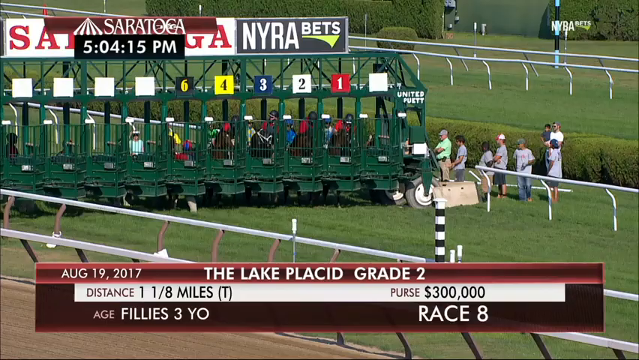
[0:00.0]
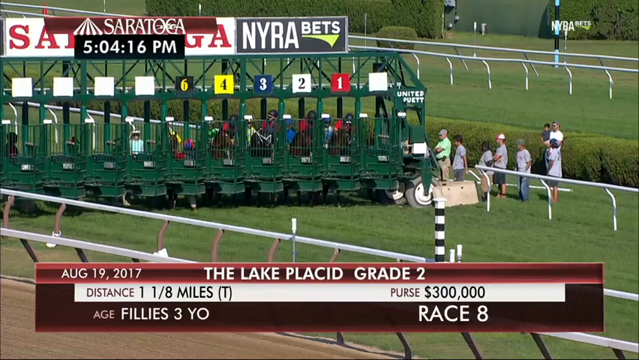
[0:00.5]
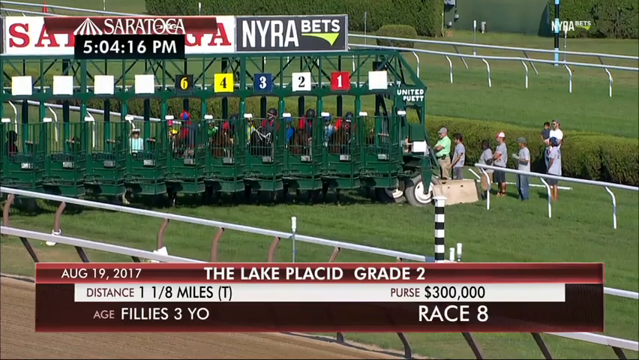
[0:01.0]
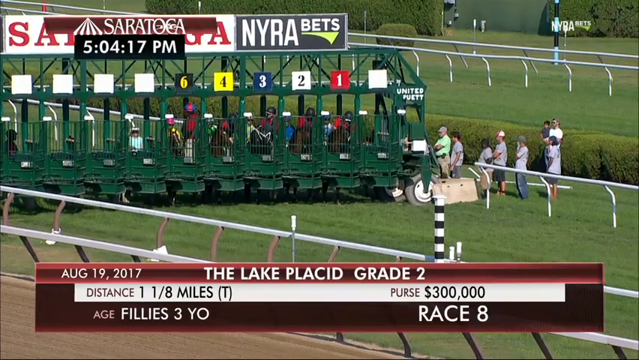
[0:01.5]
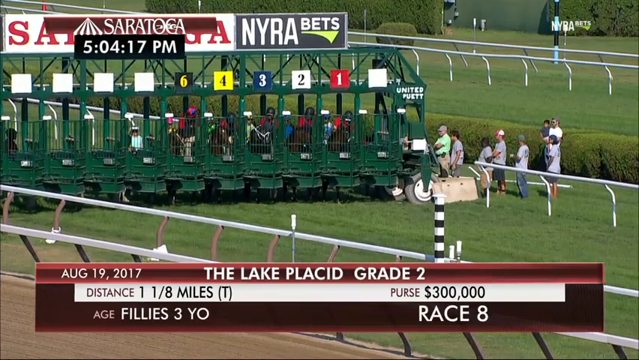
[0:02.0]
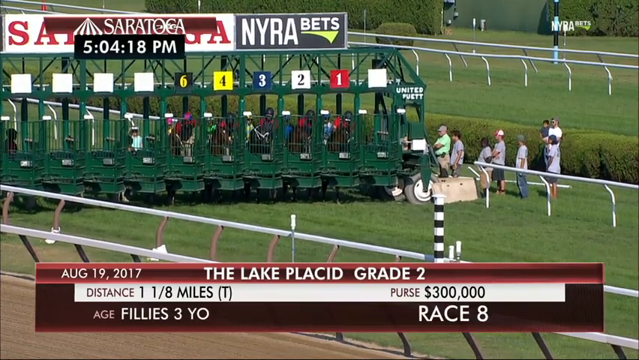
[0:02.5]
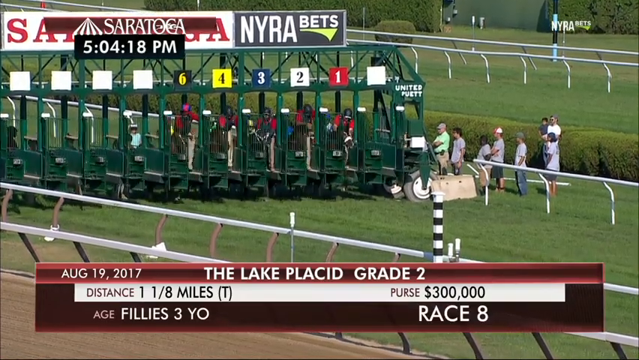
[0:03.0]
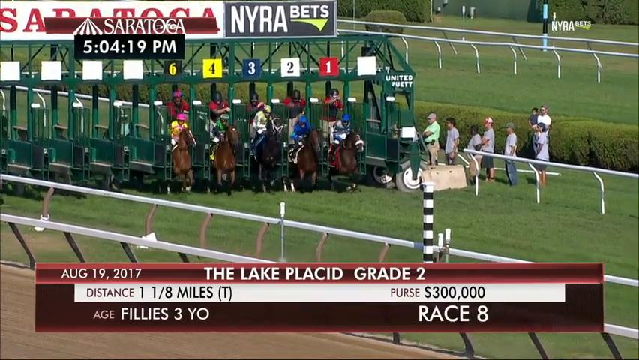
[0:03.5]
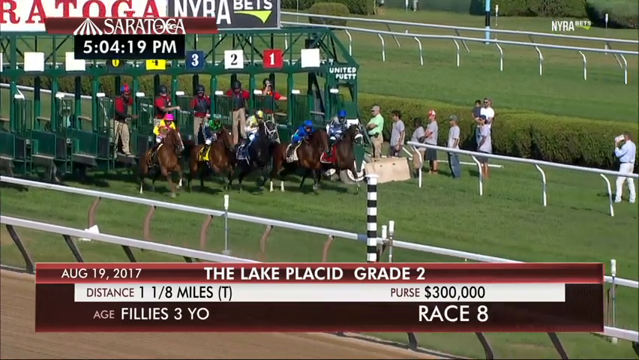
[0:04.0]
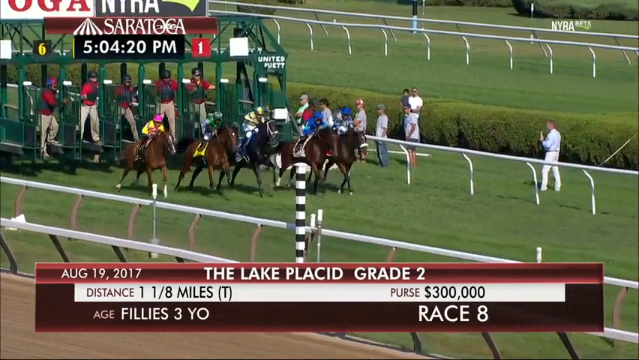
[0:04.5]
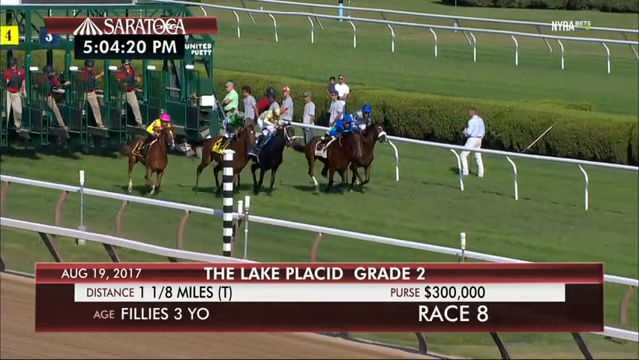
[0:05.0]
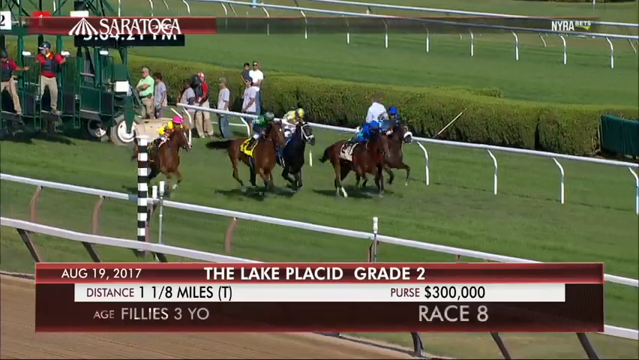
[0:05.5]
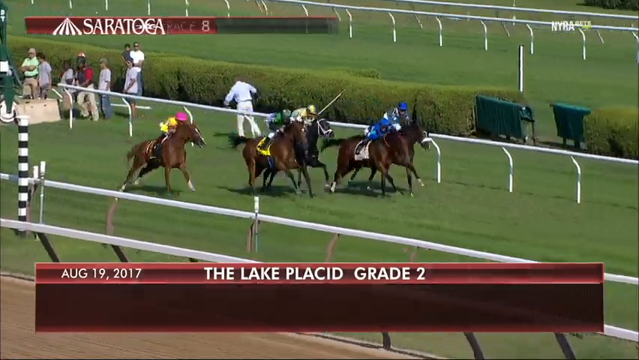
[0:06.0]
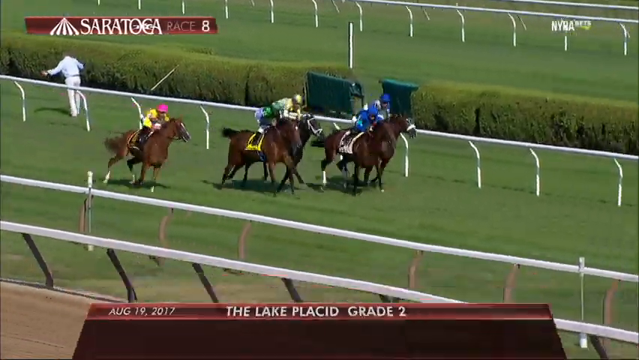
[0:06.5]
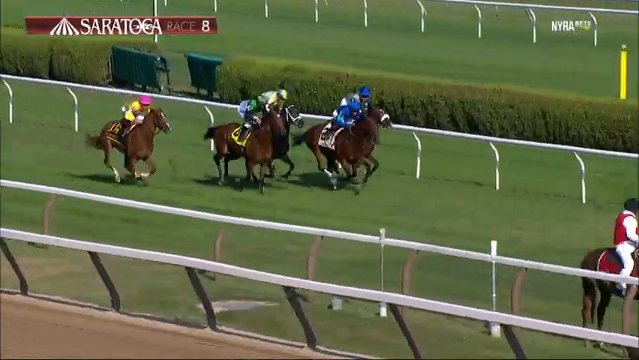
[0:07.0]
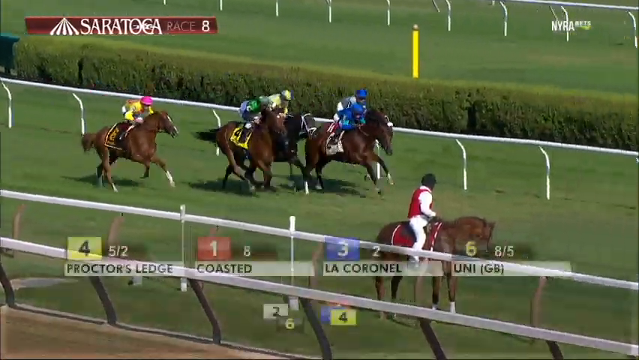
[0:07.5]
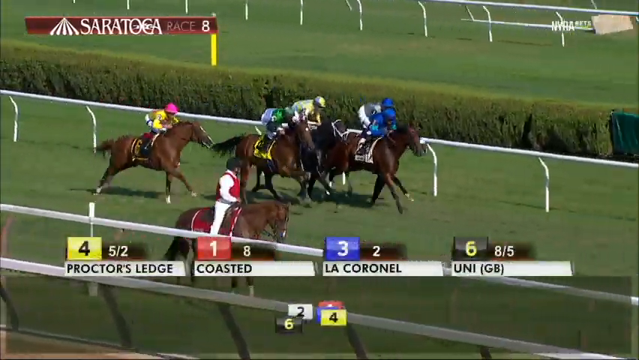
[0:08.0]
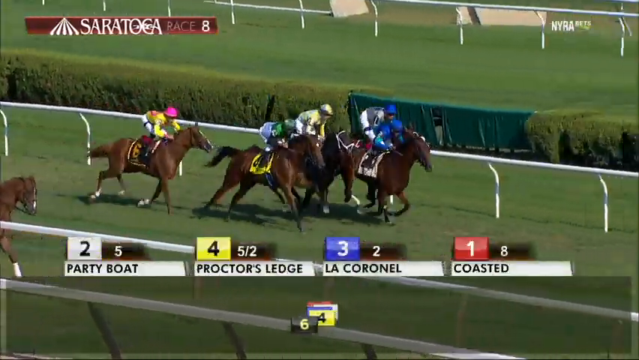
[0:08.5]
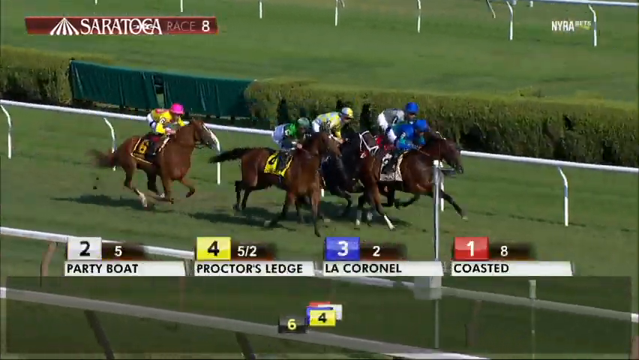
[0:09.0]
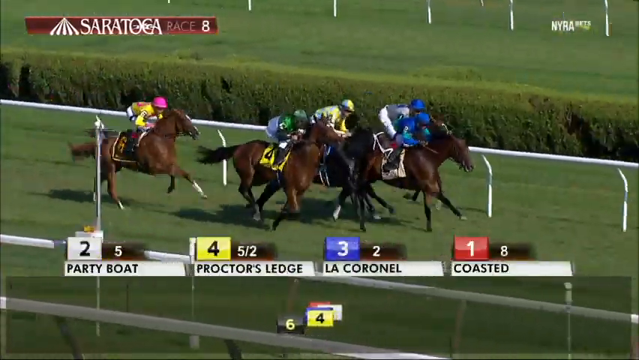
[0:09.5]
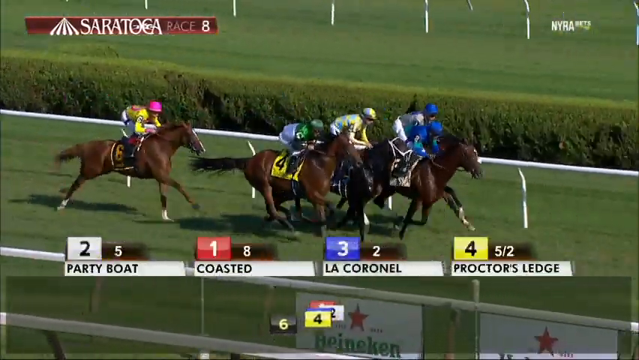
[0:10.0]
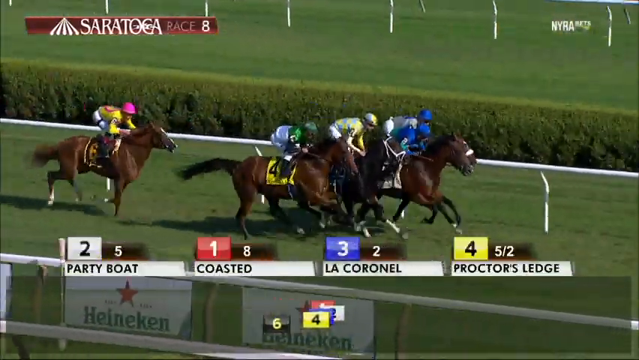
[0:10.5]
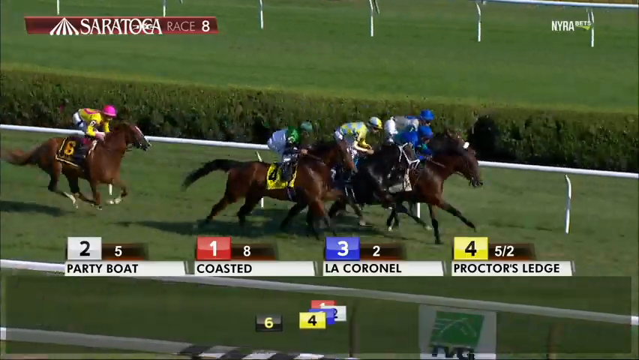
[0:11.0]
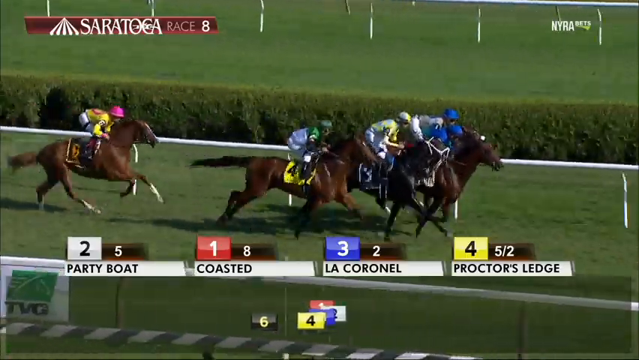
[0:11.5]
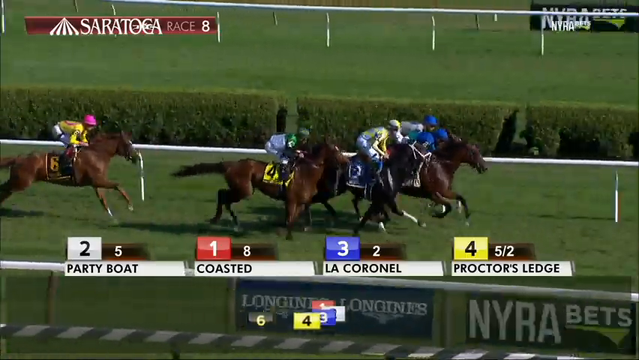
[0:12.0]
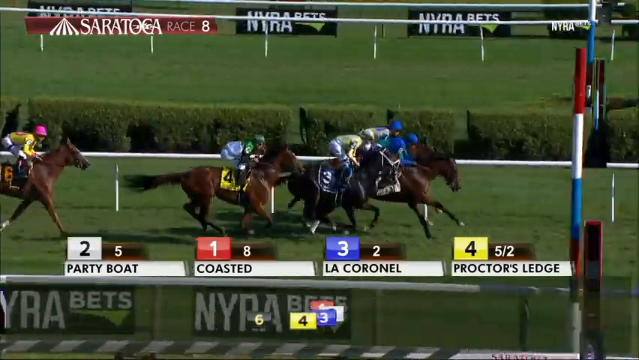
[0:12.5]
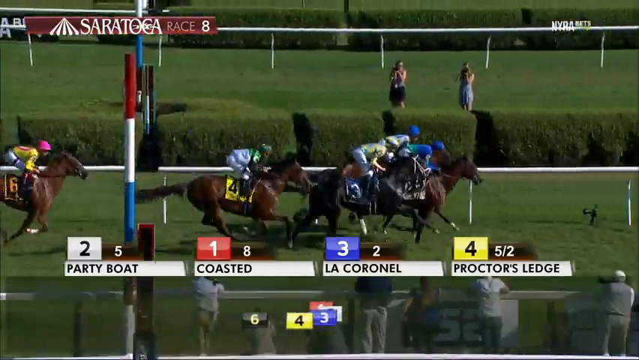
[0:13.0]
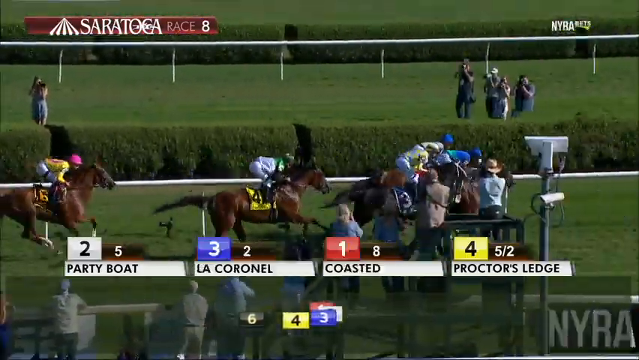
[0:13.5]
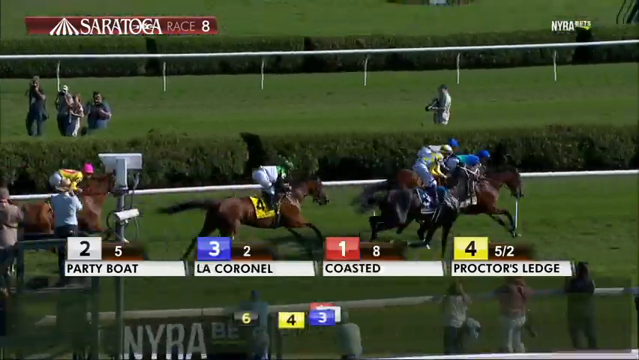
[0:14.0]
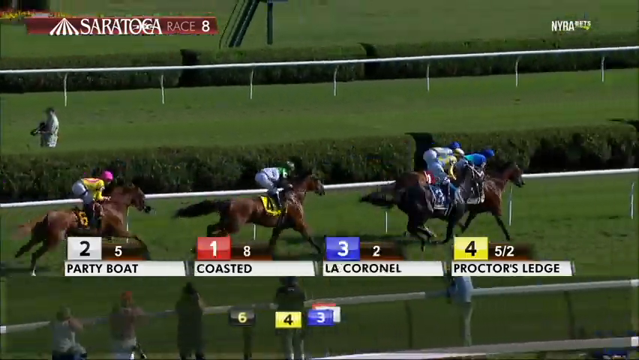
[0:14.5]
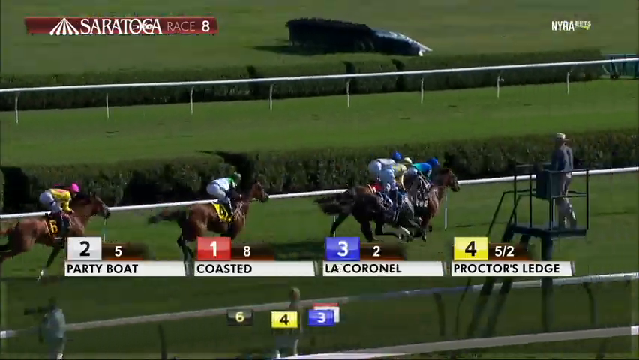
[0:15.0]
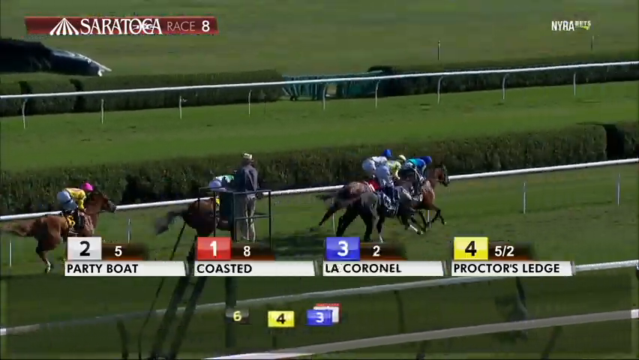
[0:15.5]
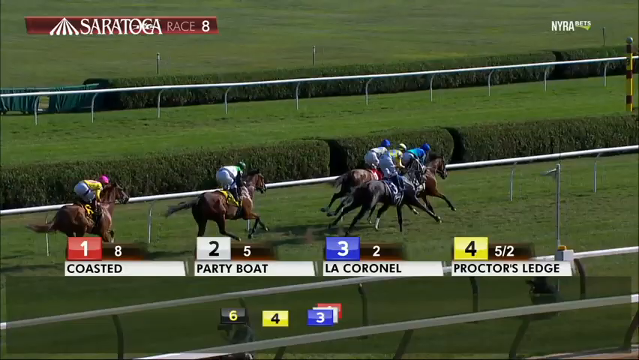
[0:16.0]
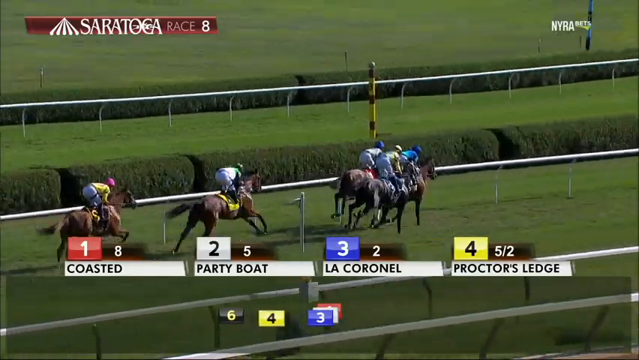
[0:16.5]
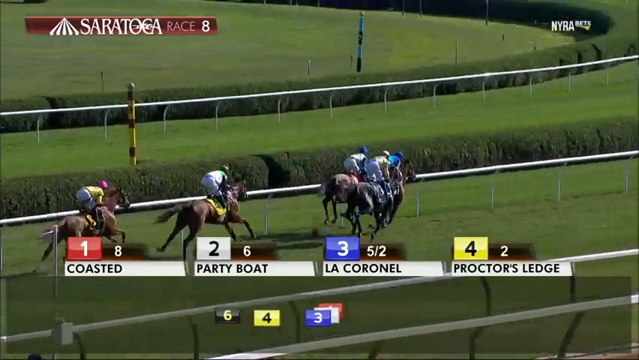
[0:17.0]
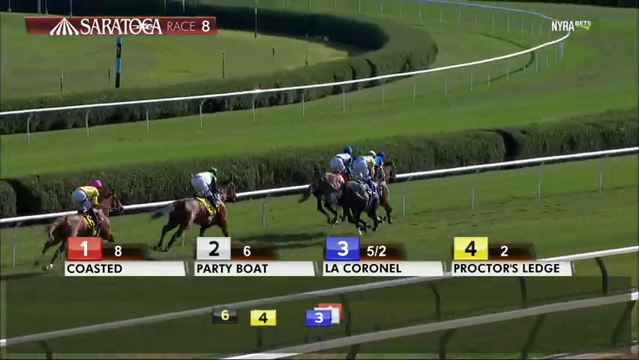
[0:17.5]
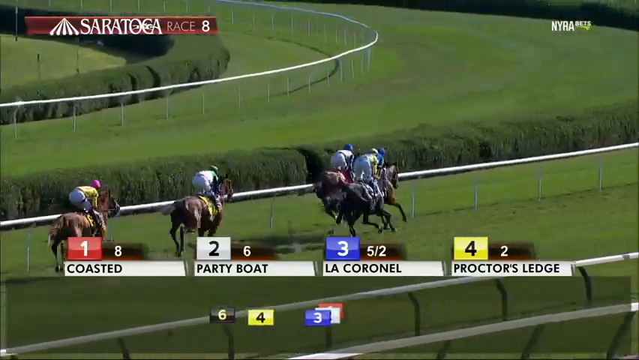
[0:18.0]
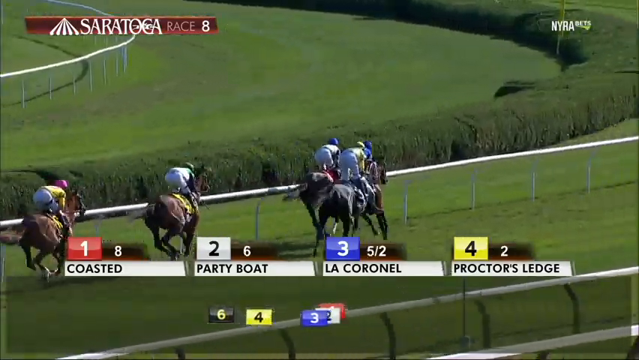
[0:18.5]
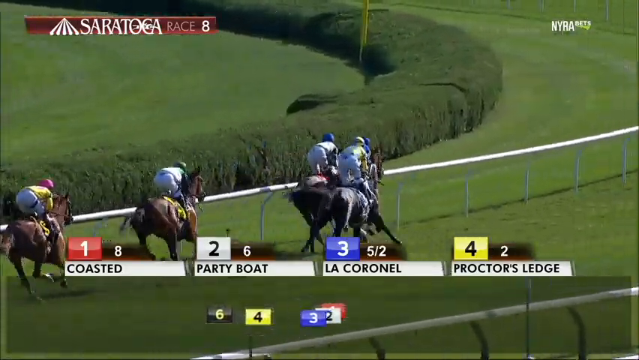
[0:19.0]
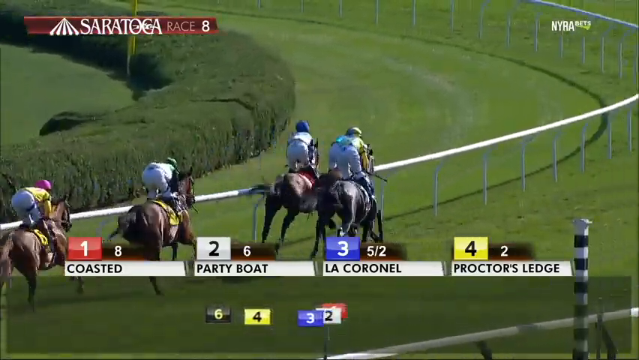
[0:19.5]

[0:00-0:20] A horse race is viewed from the left-hand side looking forward, with a gate where the horses are lining up. Text at the bottom of the screen reads "the Lake Placid Grade 2", and the distance is shown as 1 1/8 miles with a purse of $300,000. The date is August 19, 2017. About five or six people are standing to the side of the gate, watching the horses get in place. The gates open and the horses come out; there appear to be five horses racing. Additional graphics at the bottom of the screen seem to show who is in first. Four horses are identified there: number two is Party Boat, number one is Coasted, number three is Lock Colonel, and number four is Proctor's Ledge. The horses pass the camera and are seen from a backside angle. The jockeys wear different colors: one in a kind of dark blue, one in light blue, one in white, one in green, and one in yellow. The horses enter the first turn.